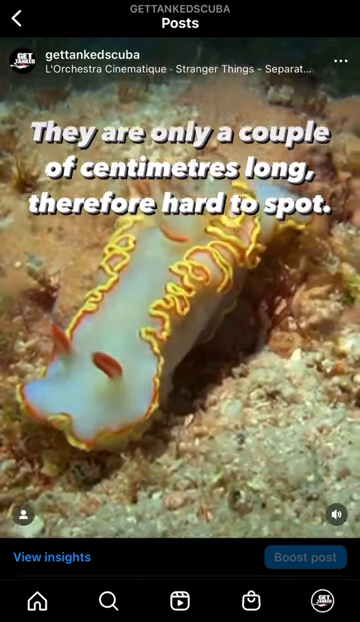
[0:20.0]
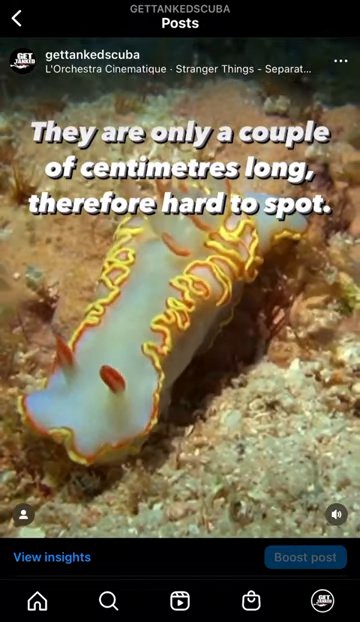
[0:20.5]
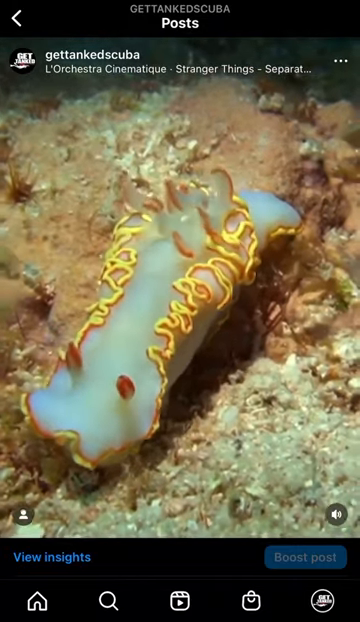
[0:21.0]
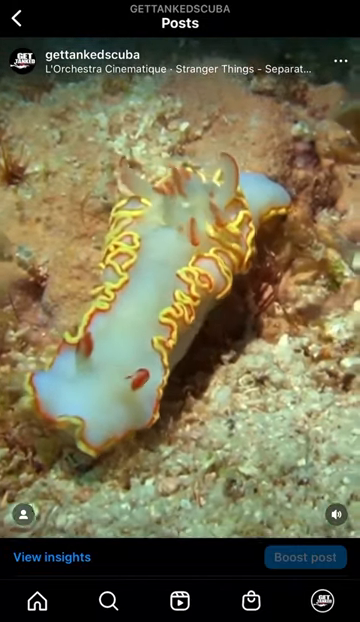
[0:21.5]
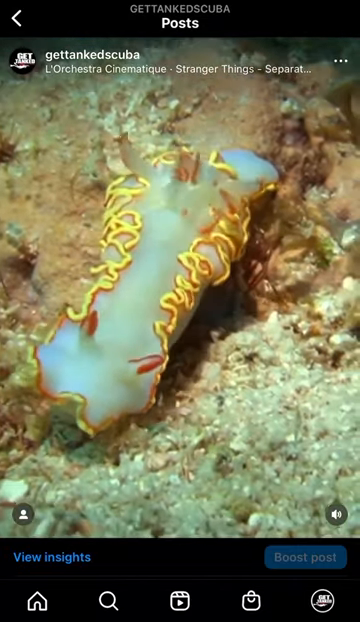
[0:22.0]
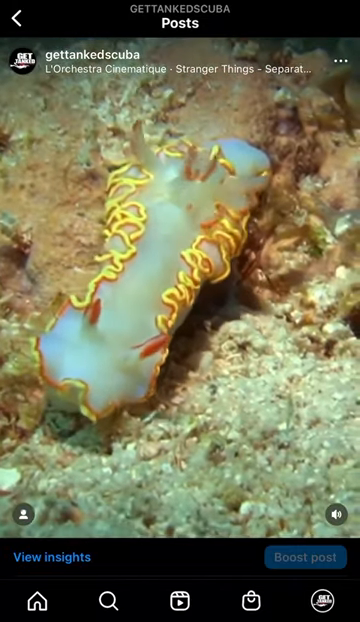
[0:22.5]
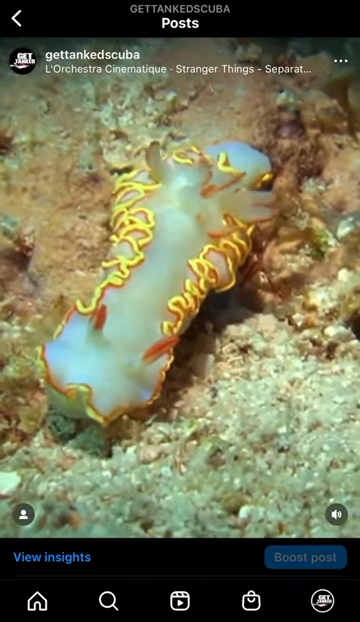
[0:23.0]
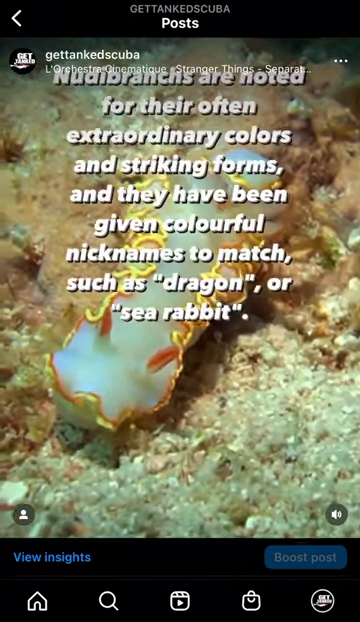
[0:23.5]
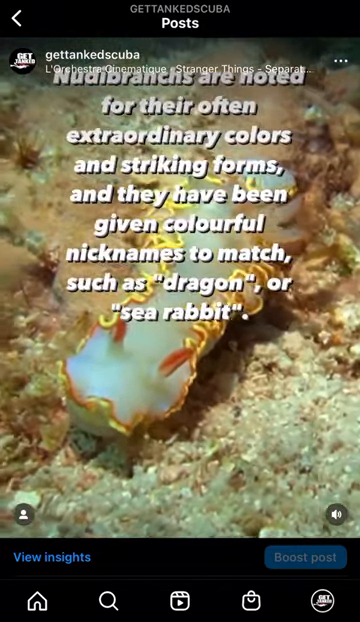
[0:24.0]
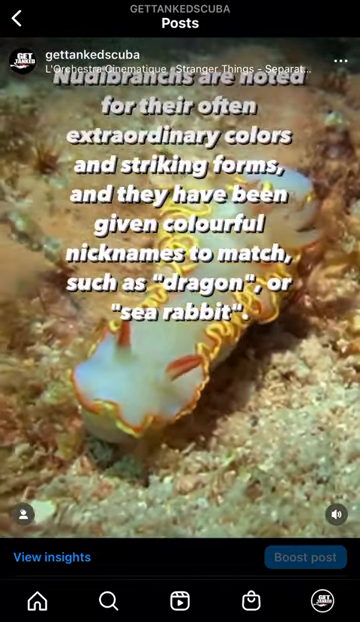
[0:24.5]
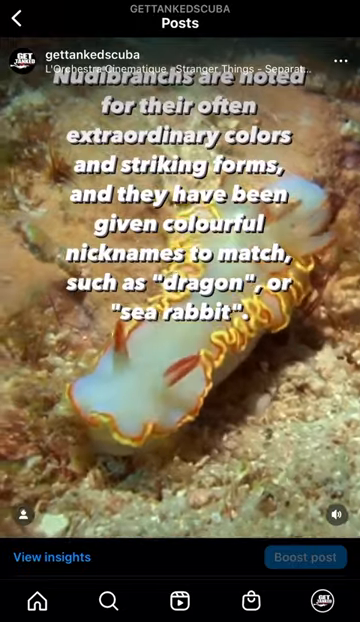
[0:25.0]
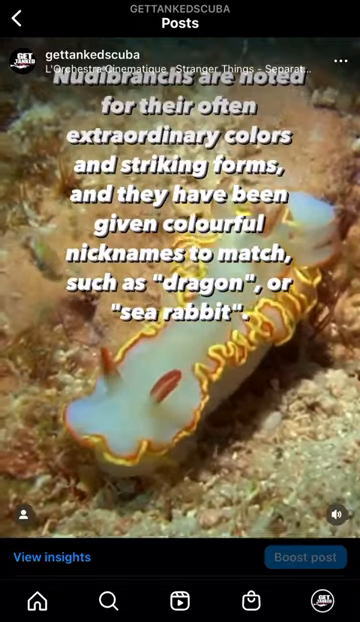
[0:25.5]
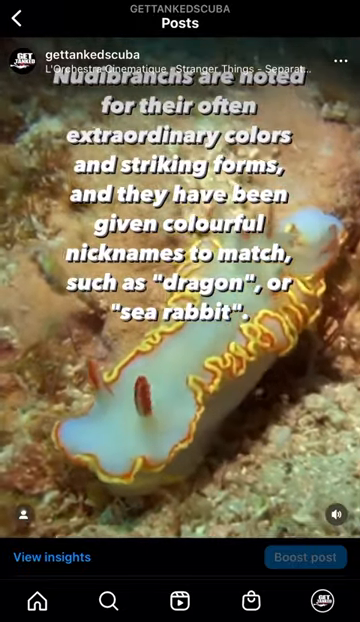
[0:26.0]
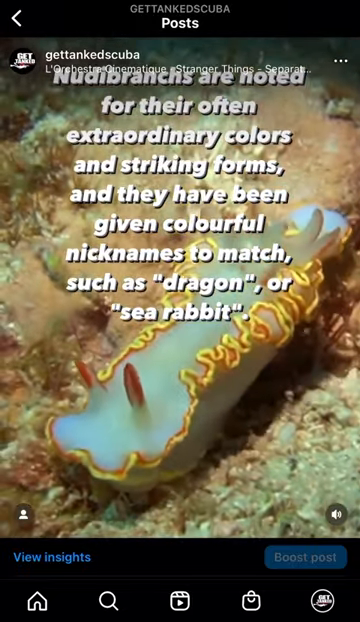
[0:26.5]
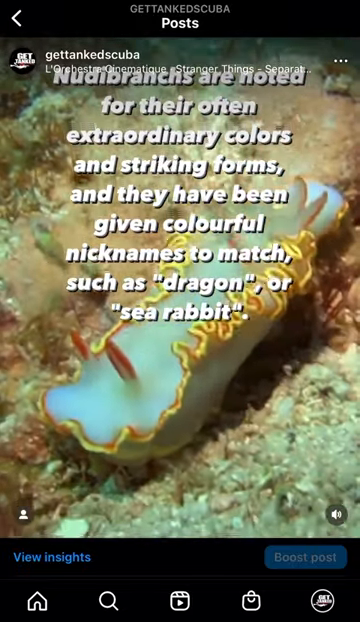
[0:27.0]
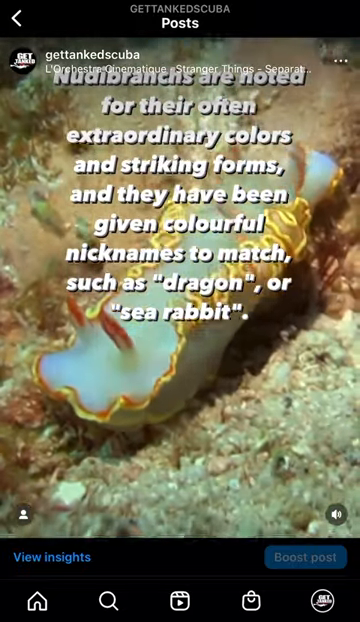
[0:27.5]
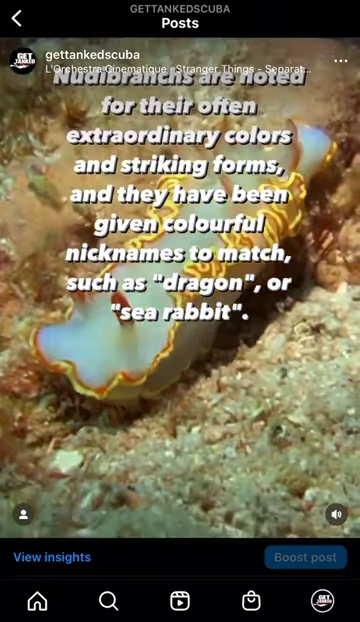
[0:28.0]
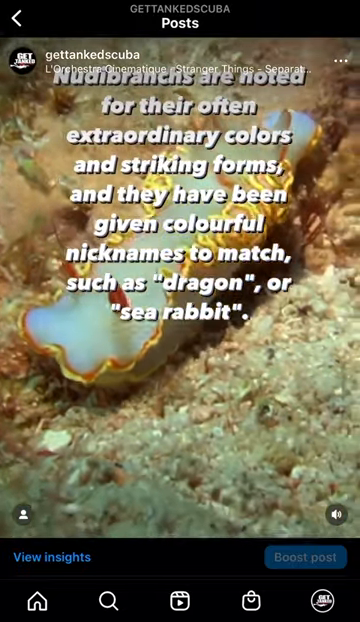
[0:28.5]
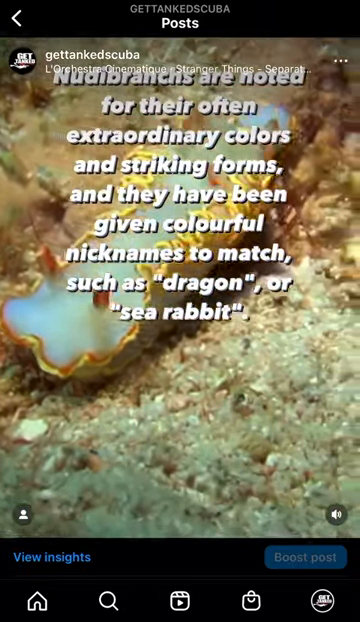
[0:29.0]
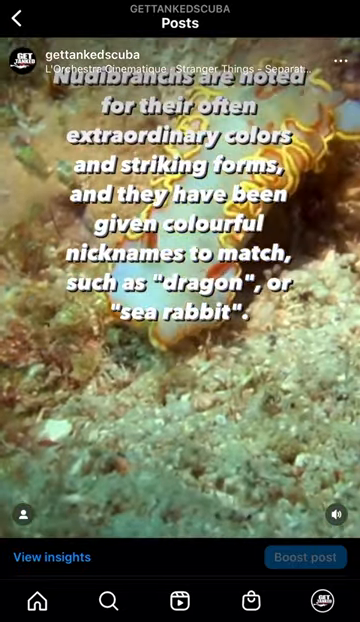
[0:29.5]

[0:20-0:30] A reel, from either Instagram or potentially TikTok, shows a sea slug flopping around in the ocean or at the bottom of an aquarium. White text appears on screen reading "nudibranchs are noted for their often extraordinary colors and striking forms. And they have been given colorful nicknames to match such as dragon or sea rabbit." The slug resembles an upside-down lobster that has been cooked: its soft body is all white, and a curly yellow fringe runs all around it, as if someone drew a doodle around its body.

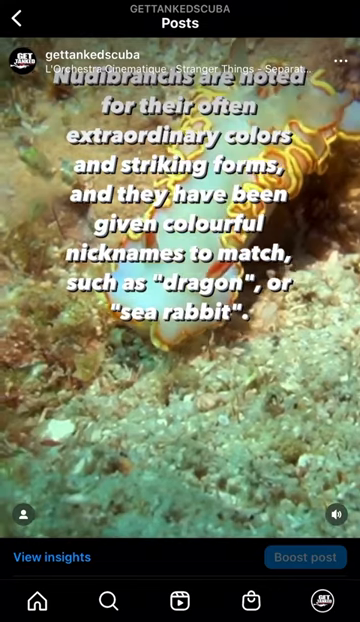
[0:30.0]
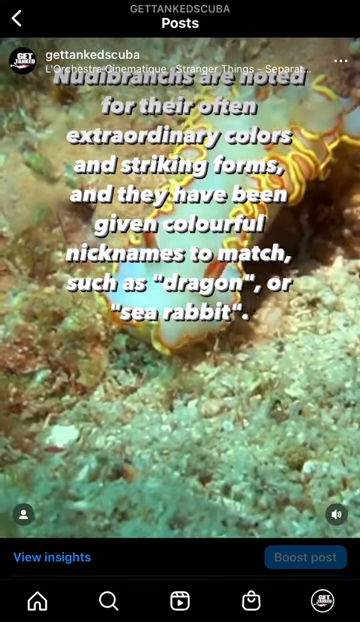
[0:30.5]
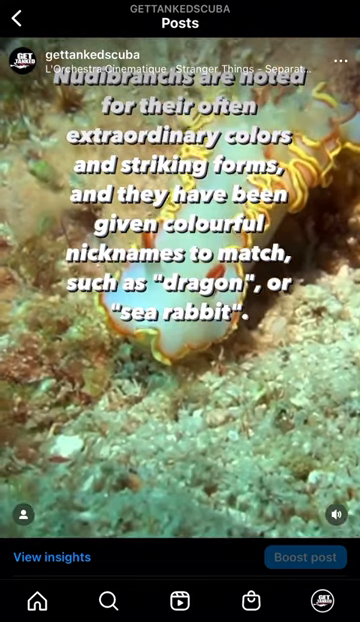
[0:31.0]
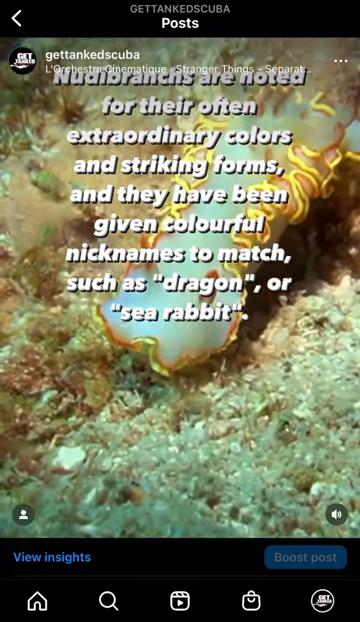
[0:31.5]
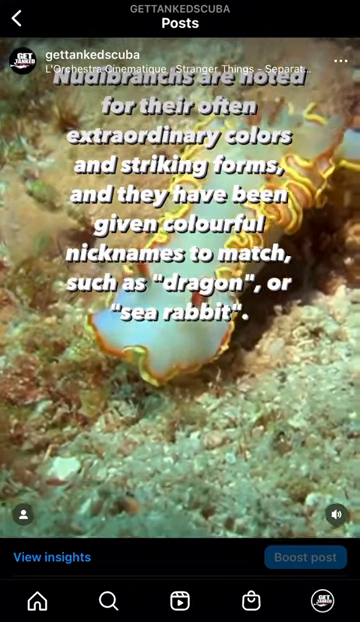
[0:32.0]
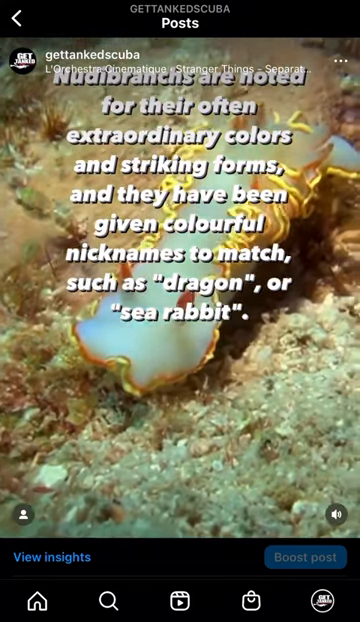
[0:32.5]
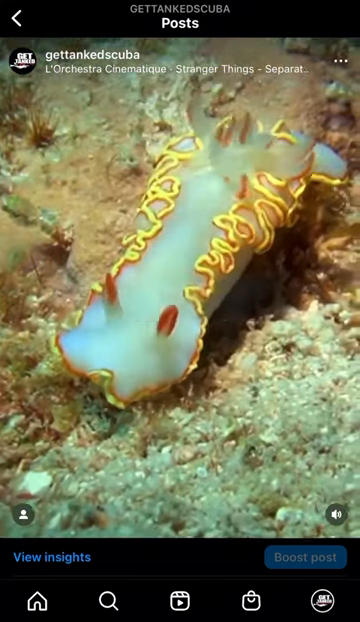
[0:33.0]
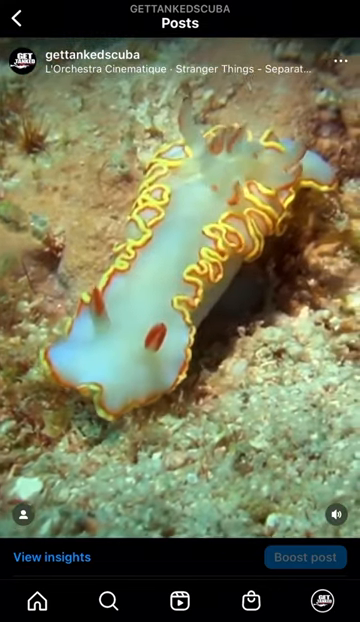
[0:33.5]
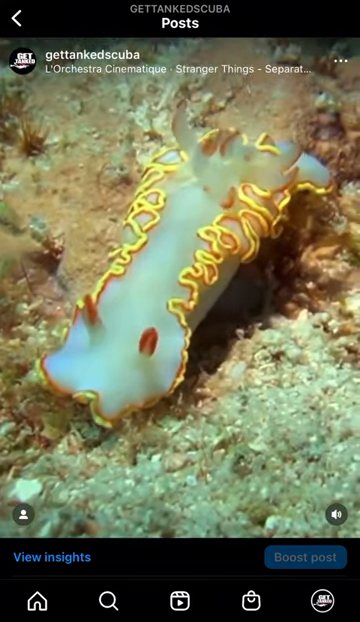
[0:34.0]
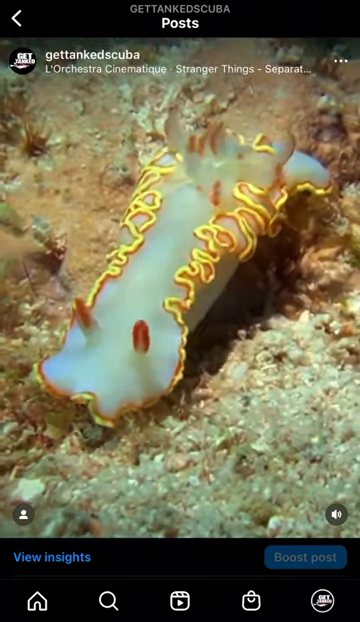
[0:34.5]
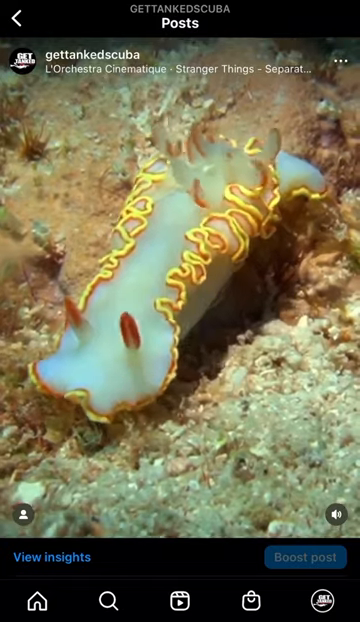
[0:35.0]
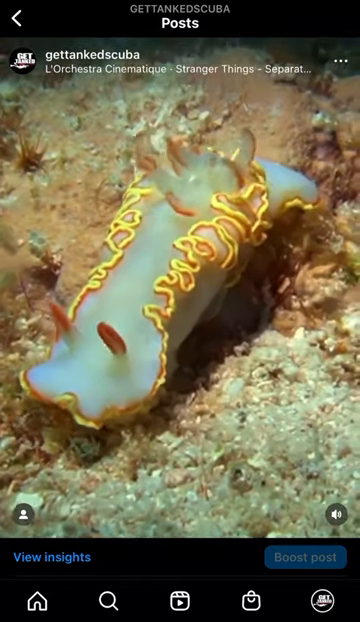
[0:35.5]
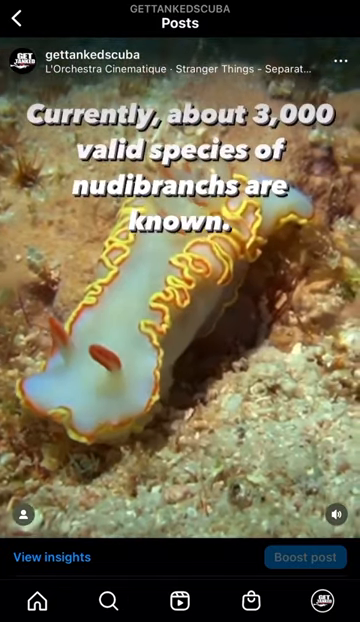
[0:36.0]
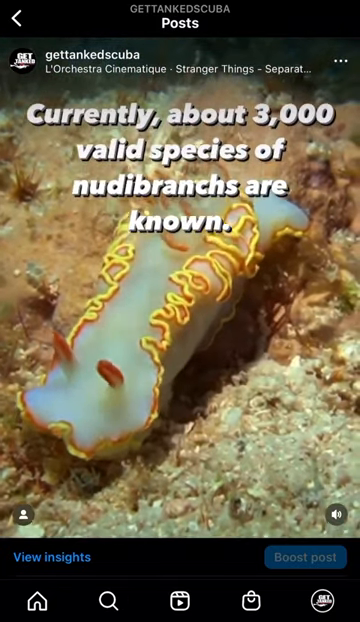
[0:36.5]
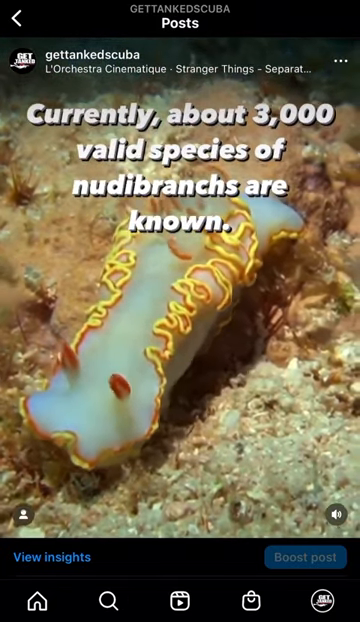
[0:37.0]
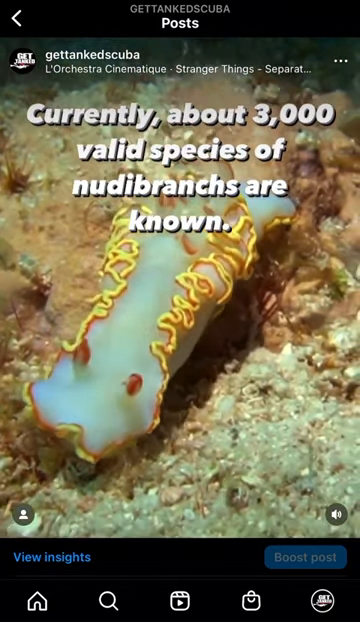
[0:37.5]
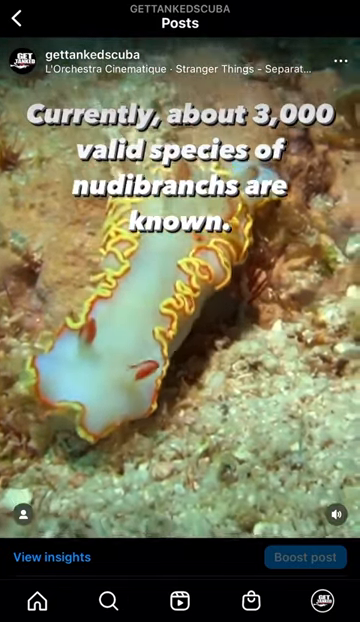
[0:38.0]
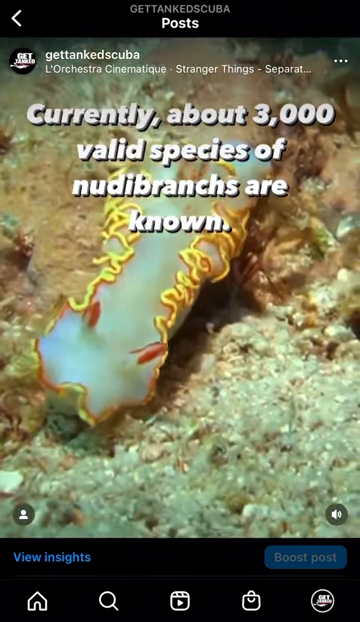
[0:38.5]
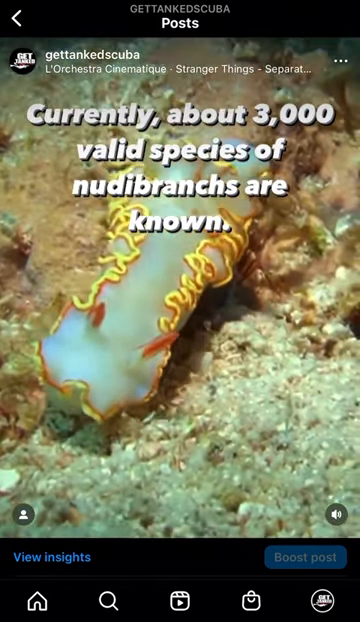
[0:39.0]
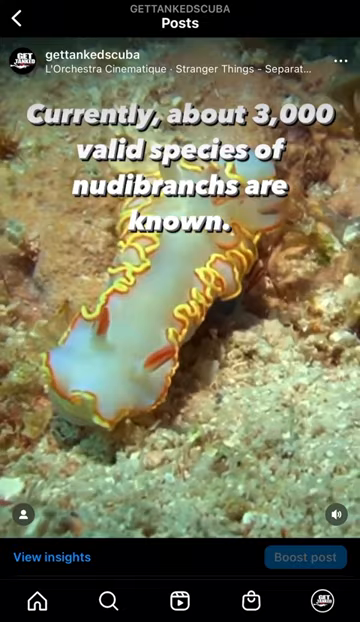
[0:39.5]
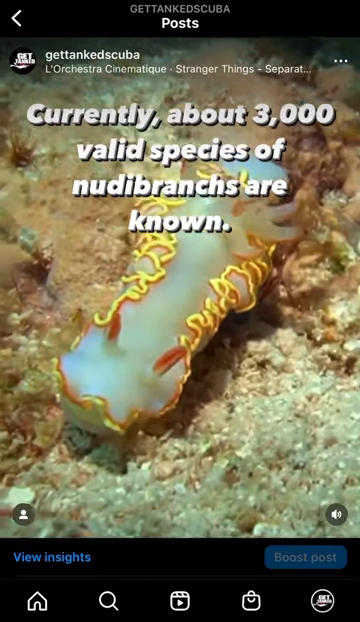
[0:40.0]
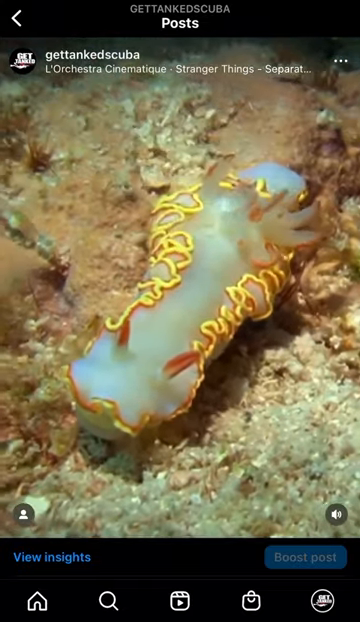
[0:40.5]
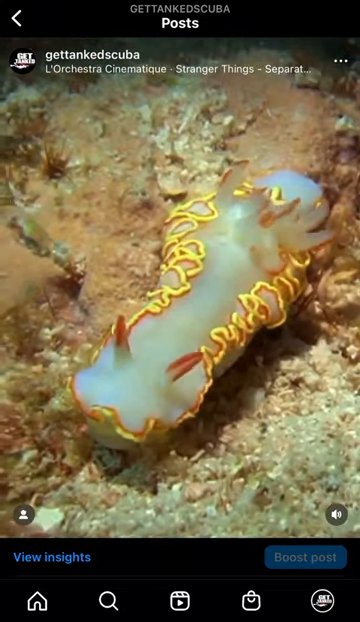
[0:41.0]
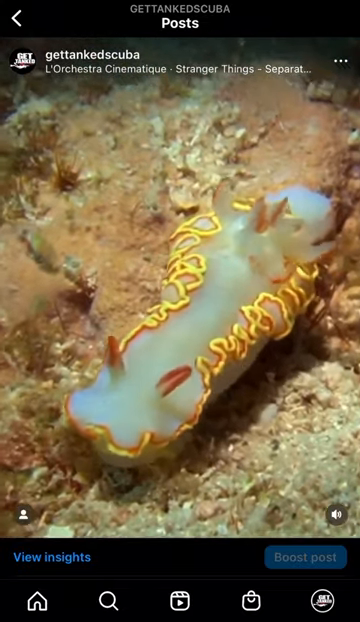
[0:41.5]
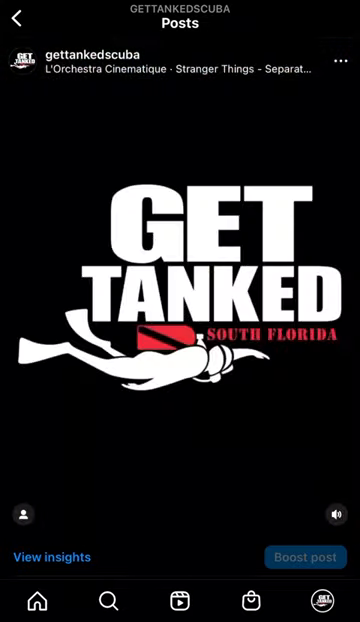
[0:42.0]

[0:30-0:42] A science-based video from a social media account called Get Tanked Scuba shows the sea slug, a white, soft-bodied creature that looks like an upside-down lobster, flailing around on a rocky bottom, either of the ocean or of a tank filled with coral or other rocks. White bold text reads "currently about 3,000 valid species of nudibranches are known." The sea slug sways from left to right and doesn't really move much except for swaying at the bottom of the tank or the ocean.